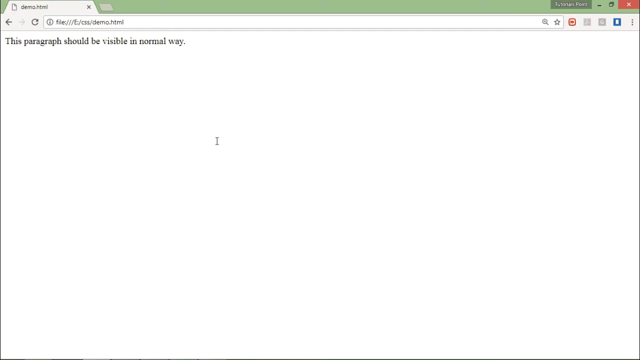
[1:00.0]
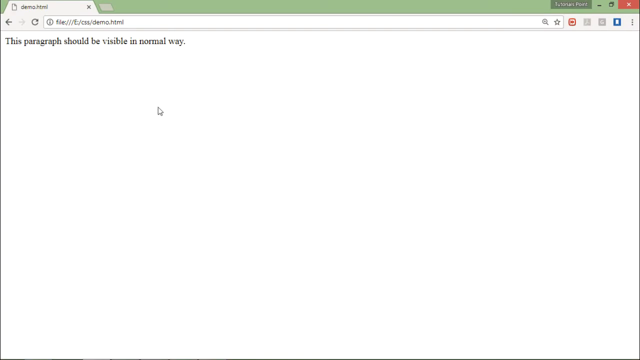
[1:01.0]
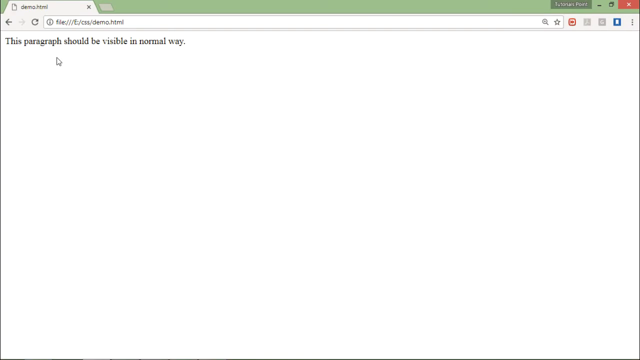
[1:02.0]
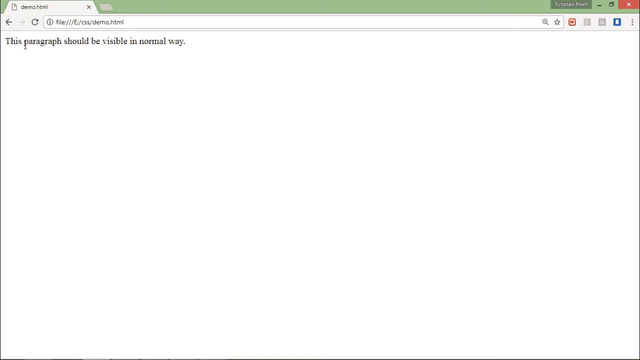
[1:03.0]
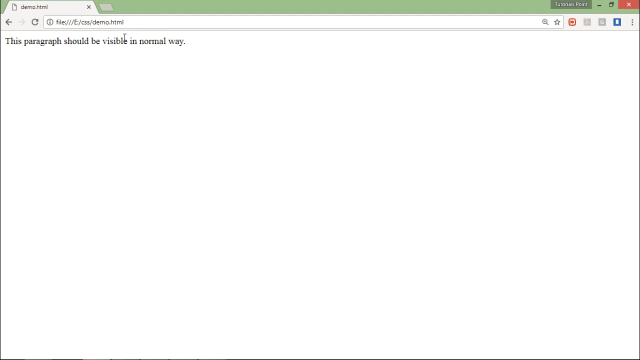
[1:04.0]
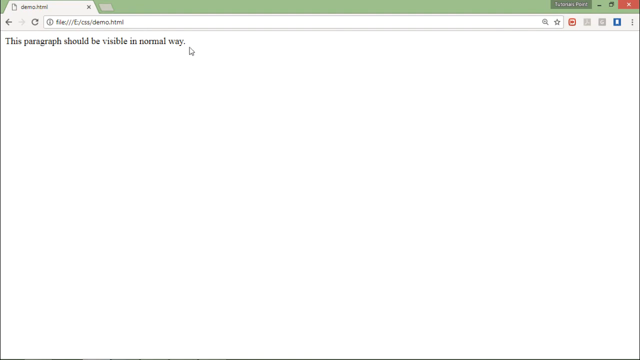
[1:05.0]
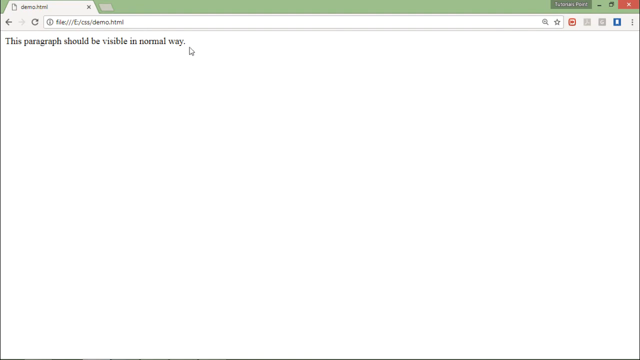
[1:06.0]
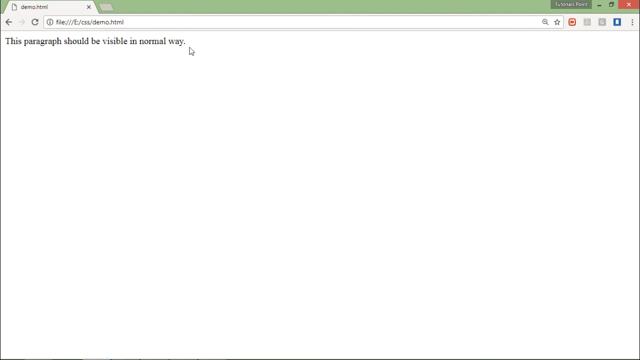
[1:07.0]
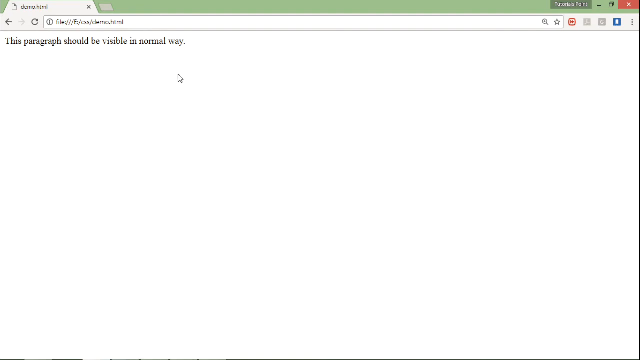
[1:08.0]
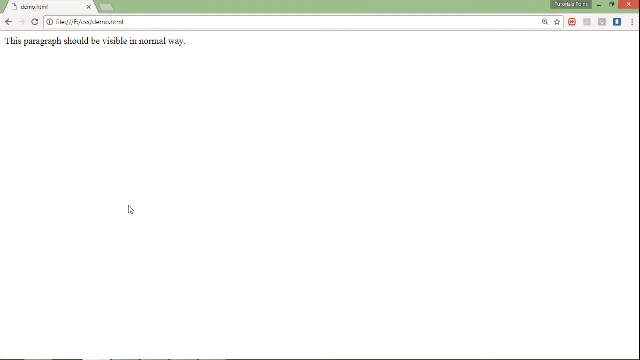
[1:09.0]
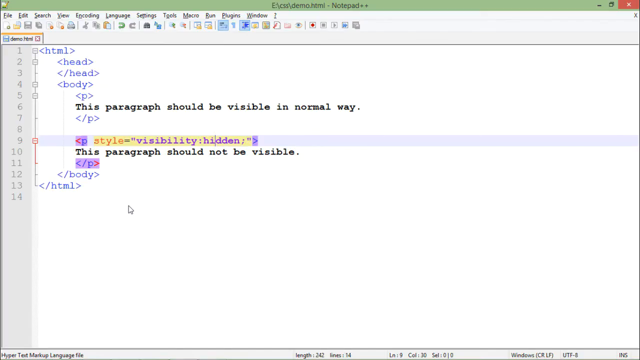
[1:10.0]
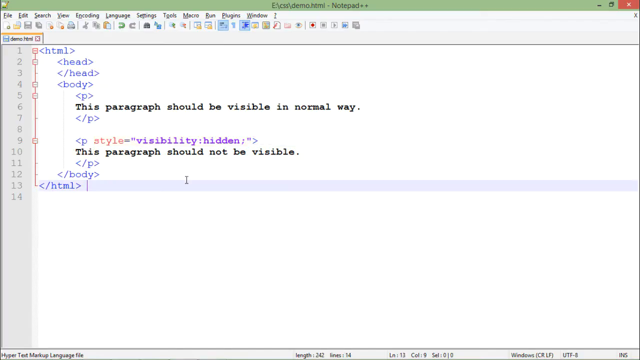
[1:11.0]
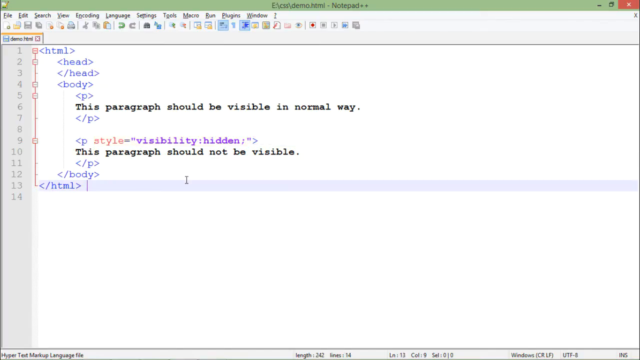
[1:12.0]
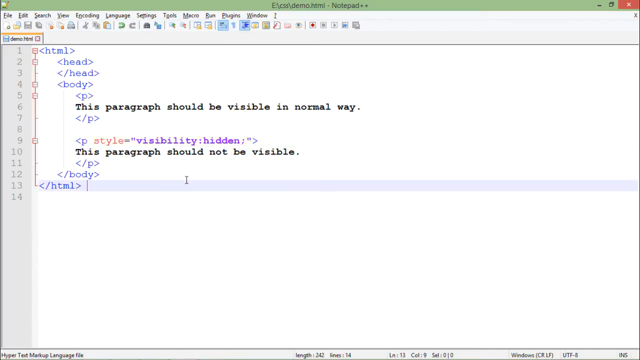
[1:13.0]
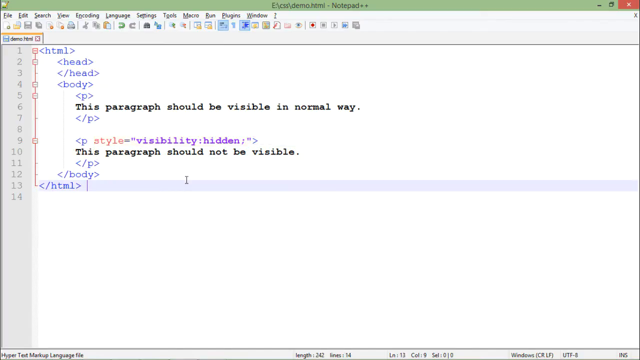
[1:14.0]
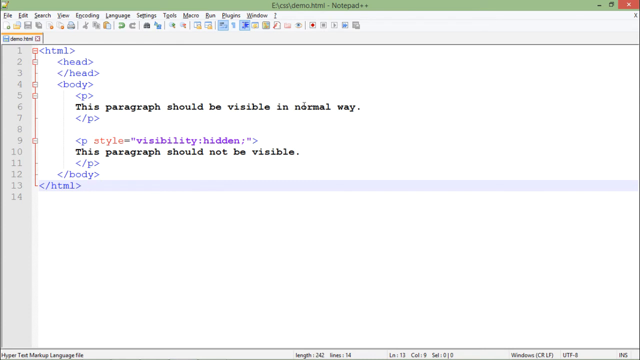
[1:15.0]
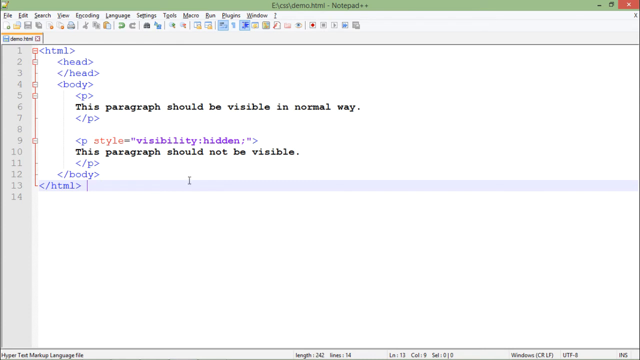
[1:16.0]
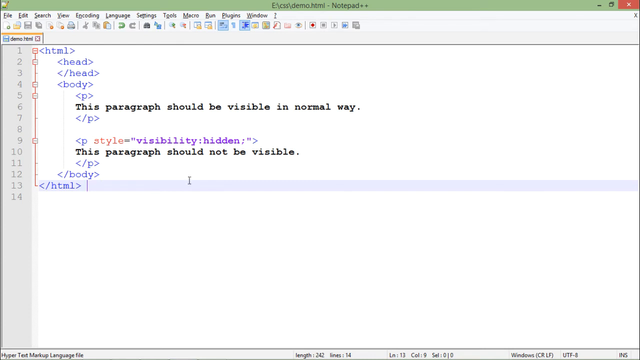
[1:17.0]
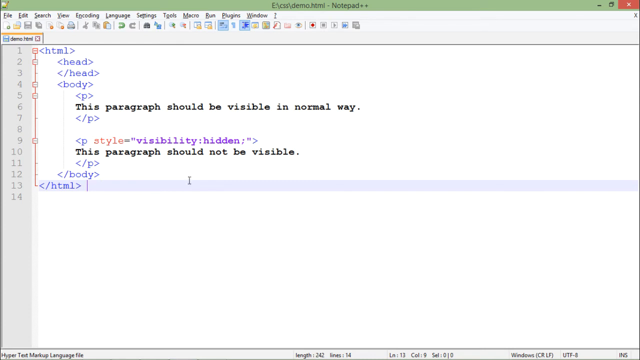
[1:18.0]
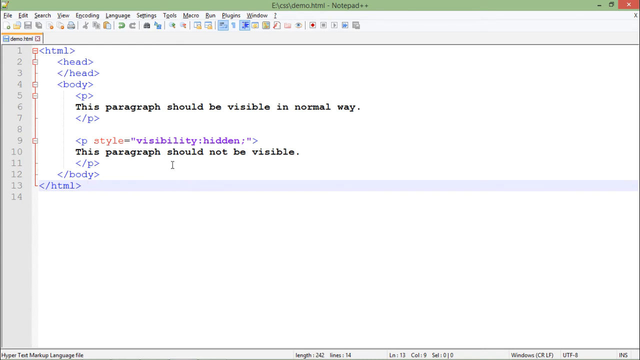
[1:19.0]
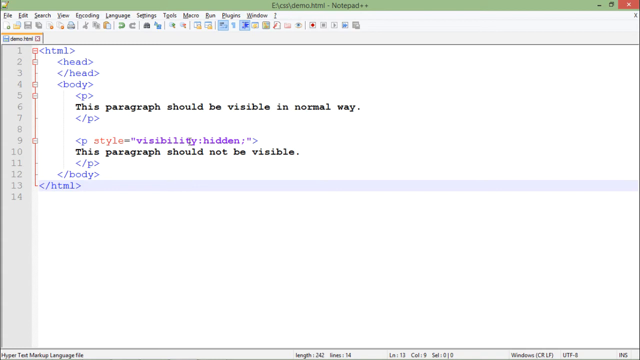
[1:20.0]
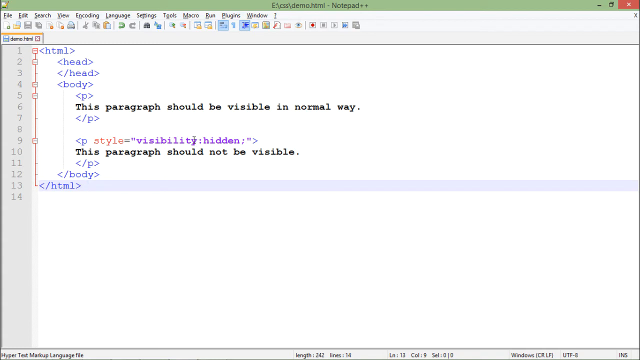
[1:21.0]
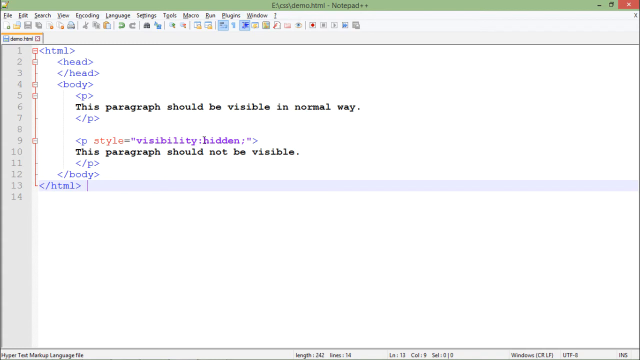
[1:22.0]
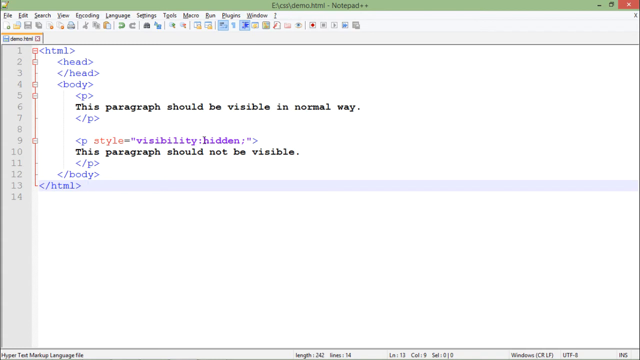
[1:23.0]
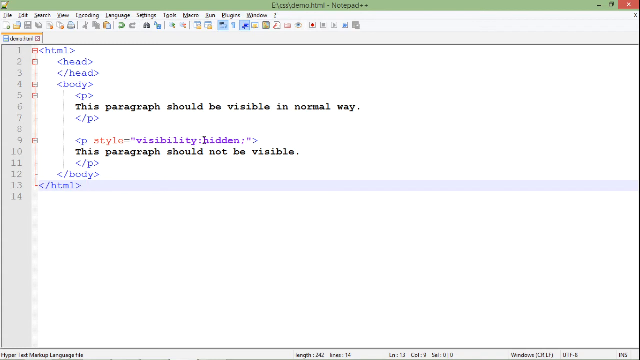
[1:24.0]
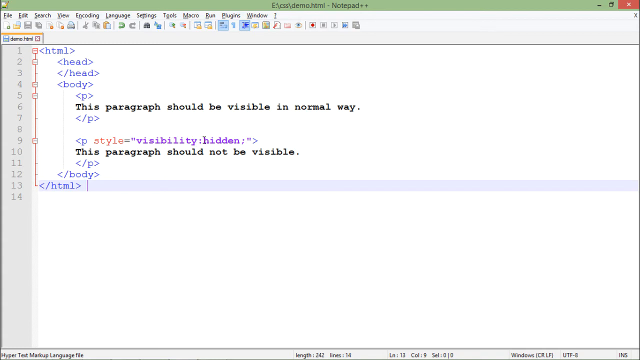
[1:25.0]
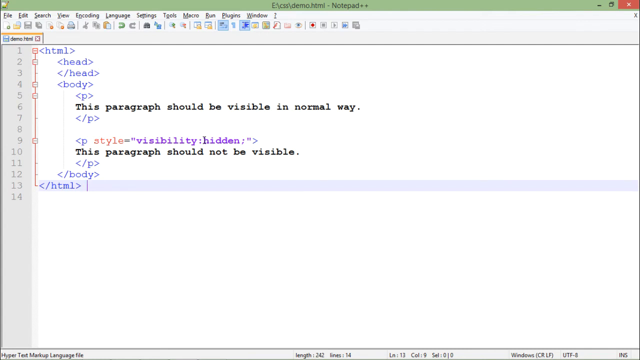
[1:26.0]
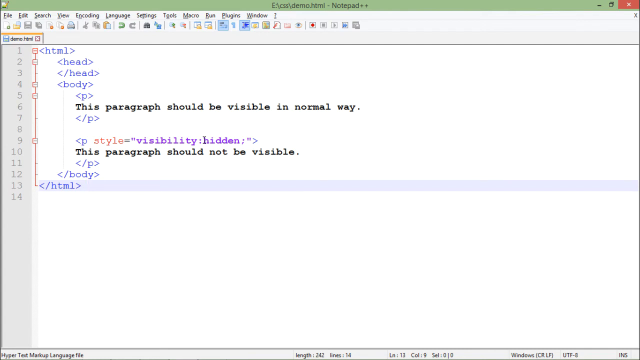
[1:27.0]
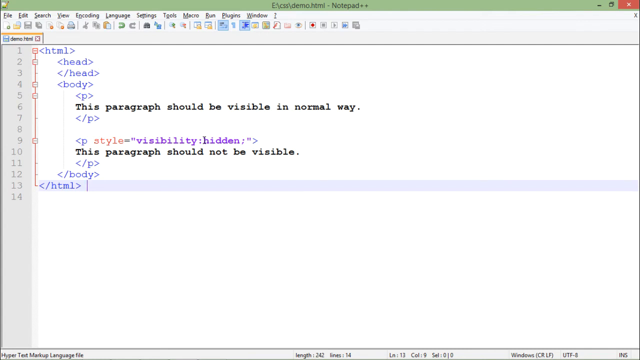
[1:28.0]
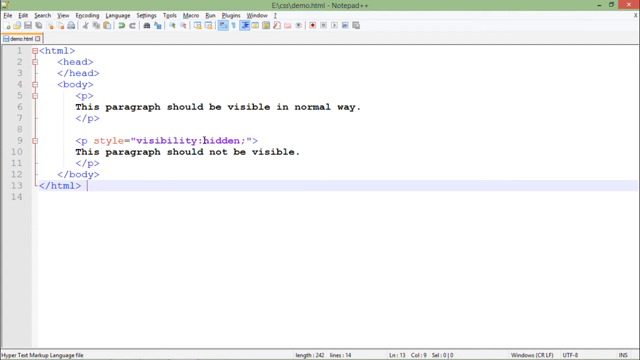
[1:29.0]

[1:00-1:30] After the code, the video moves to a web browser with a white background showing the basic HTML page, with paragraph text that says "this paragraph should be visible in a normal way," which appears normally. The video then returns to the HTML code, showing the head, body and paragraph sections, and the cursor kind of hovers over the paragraph section.